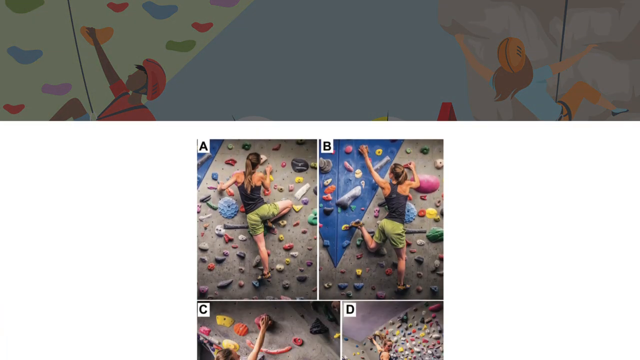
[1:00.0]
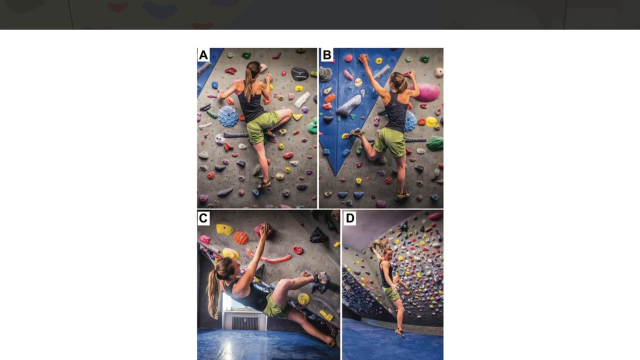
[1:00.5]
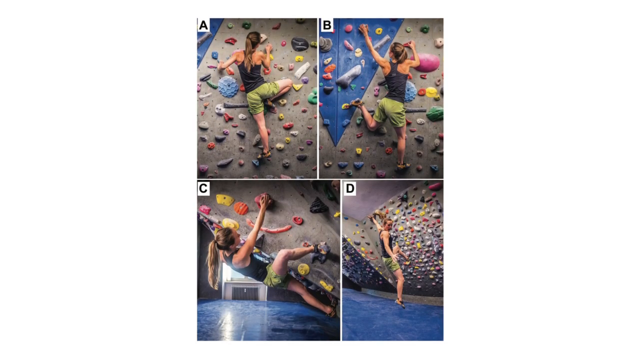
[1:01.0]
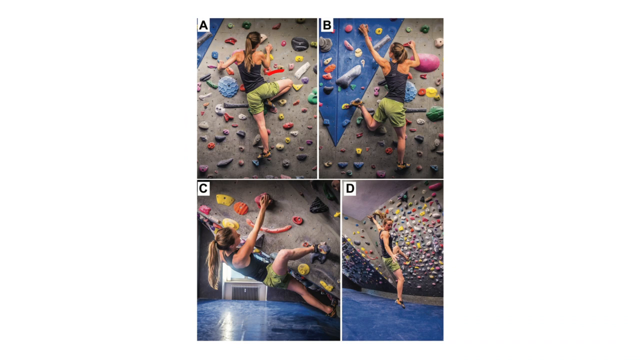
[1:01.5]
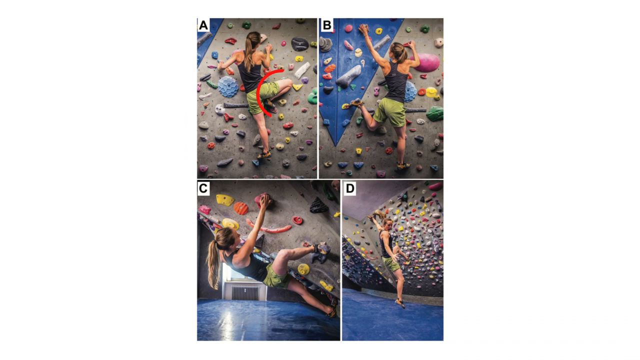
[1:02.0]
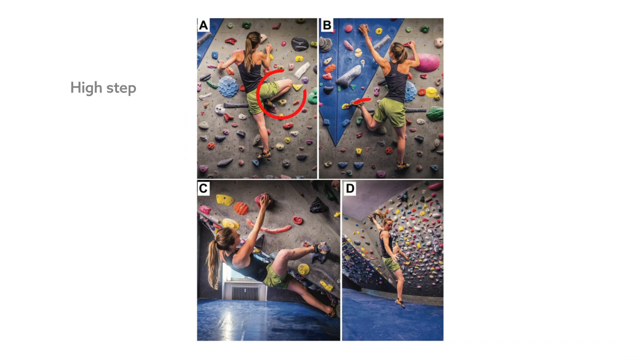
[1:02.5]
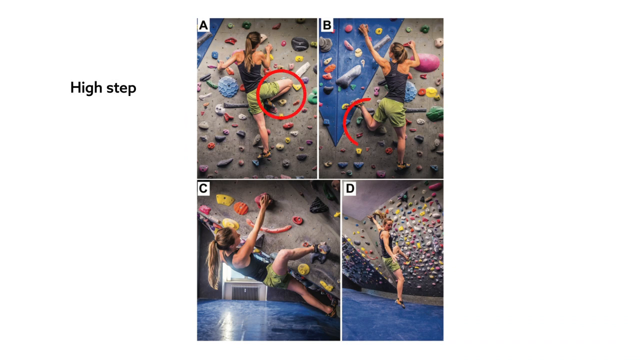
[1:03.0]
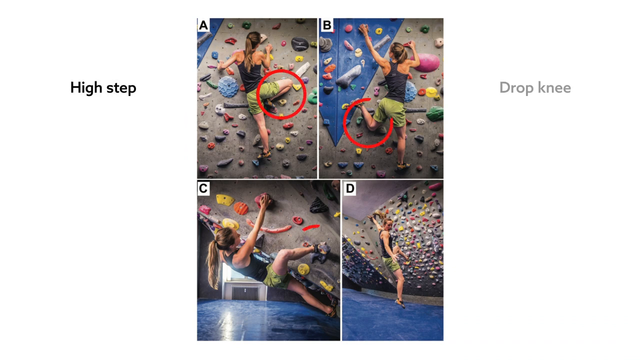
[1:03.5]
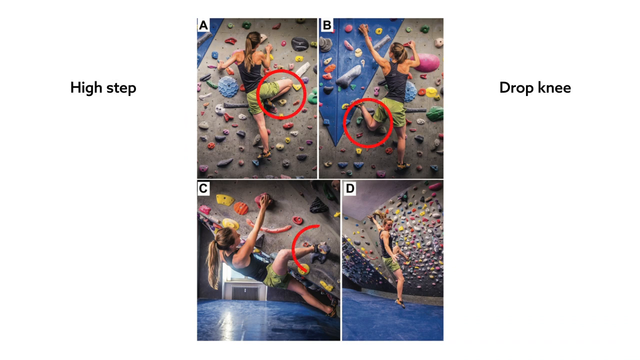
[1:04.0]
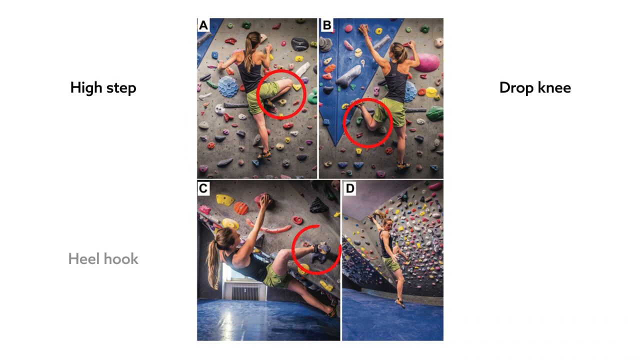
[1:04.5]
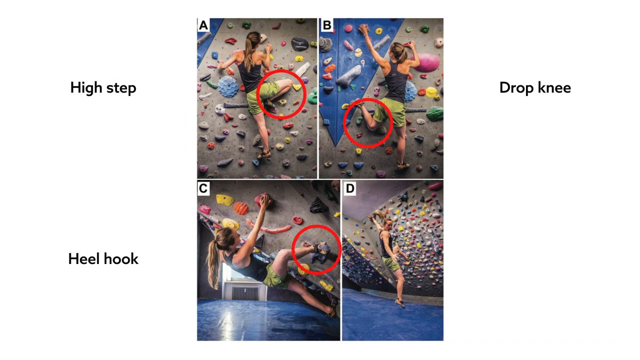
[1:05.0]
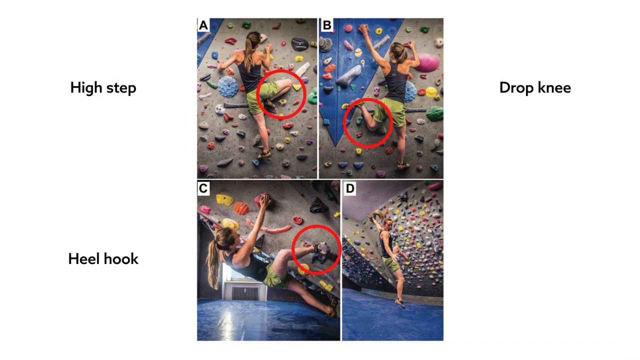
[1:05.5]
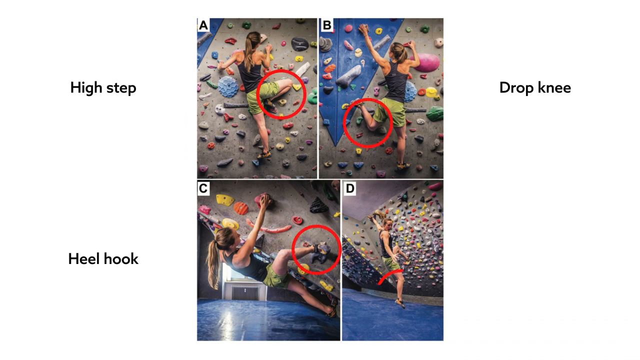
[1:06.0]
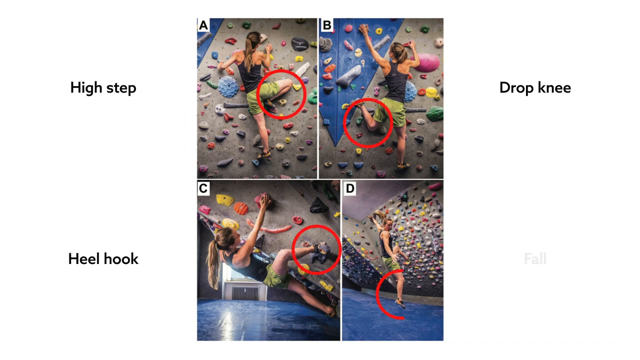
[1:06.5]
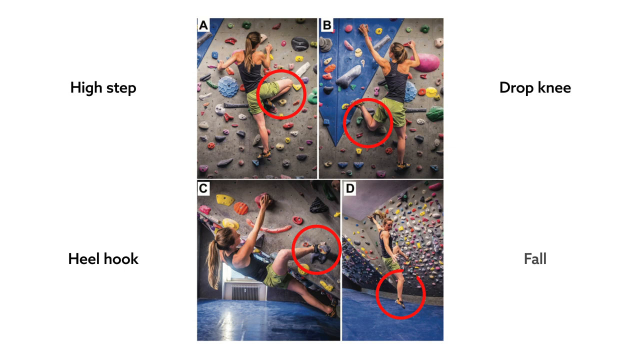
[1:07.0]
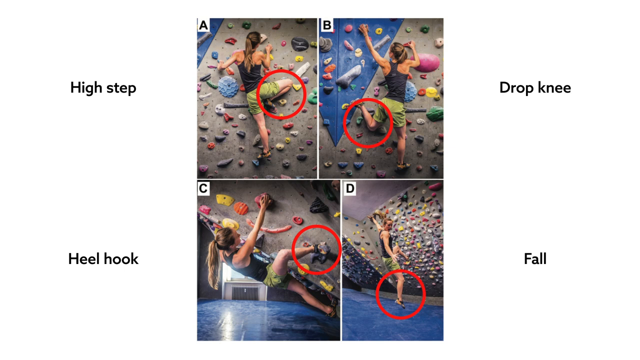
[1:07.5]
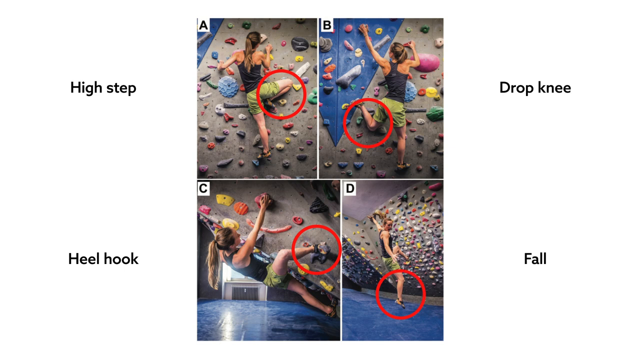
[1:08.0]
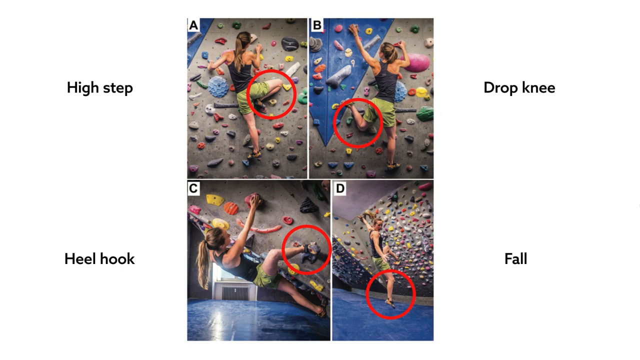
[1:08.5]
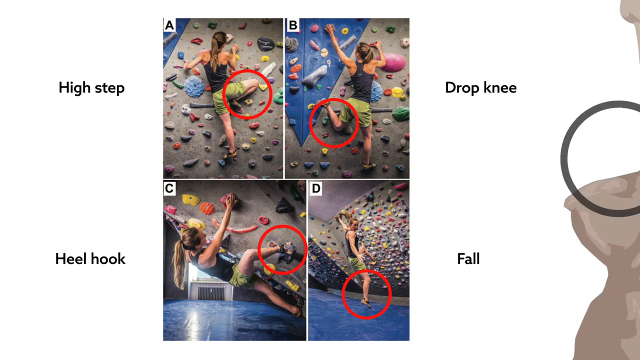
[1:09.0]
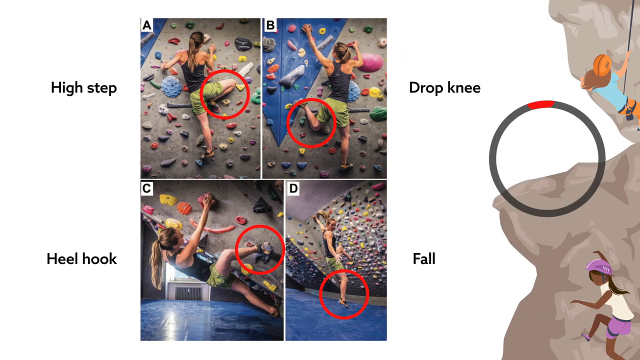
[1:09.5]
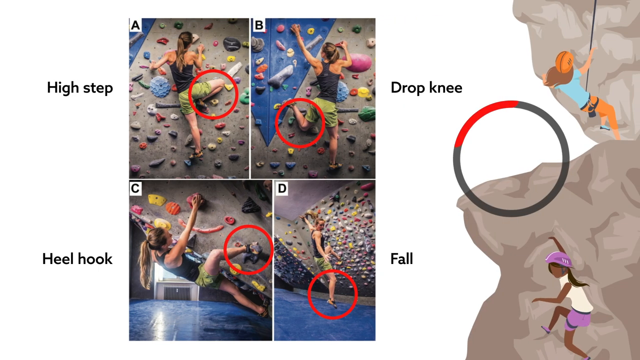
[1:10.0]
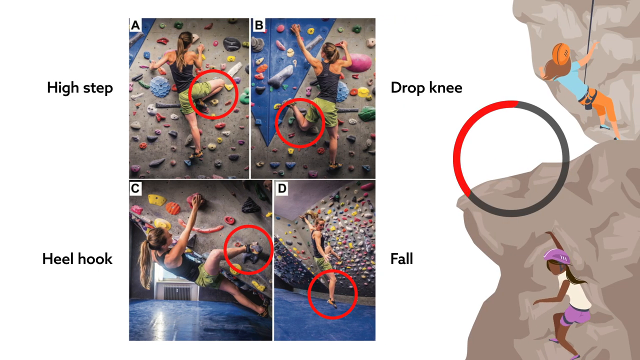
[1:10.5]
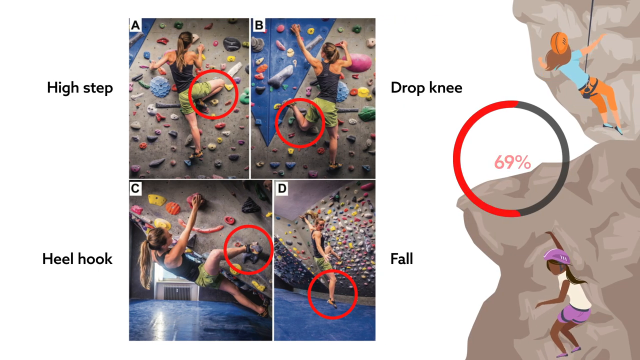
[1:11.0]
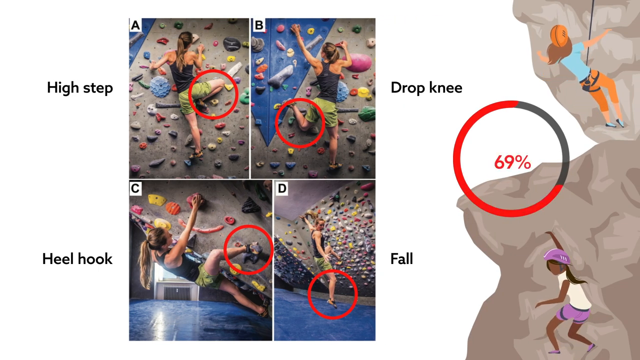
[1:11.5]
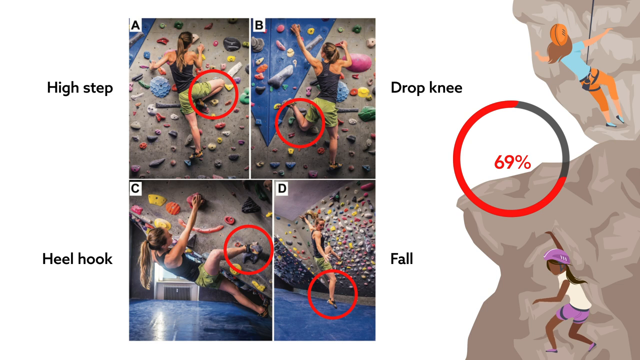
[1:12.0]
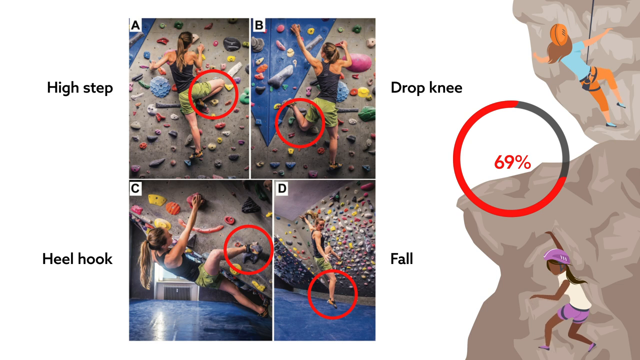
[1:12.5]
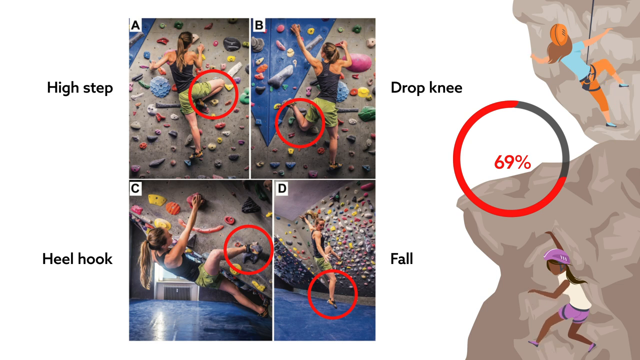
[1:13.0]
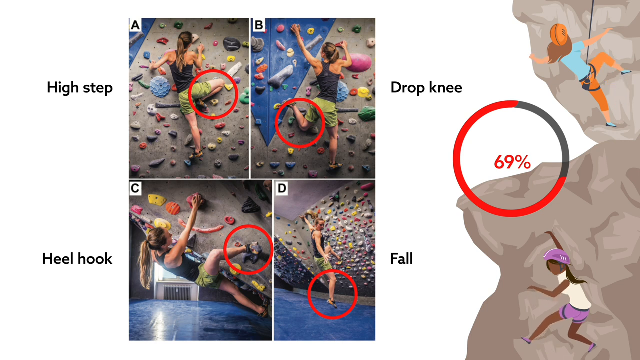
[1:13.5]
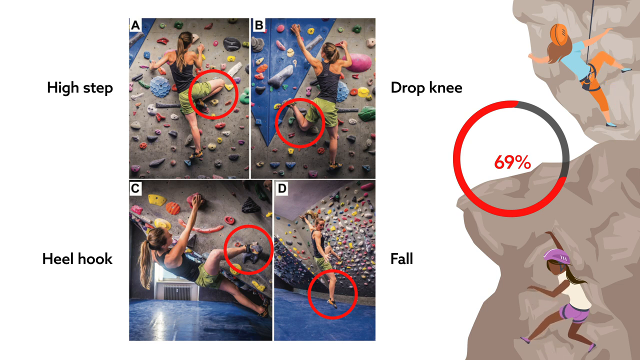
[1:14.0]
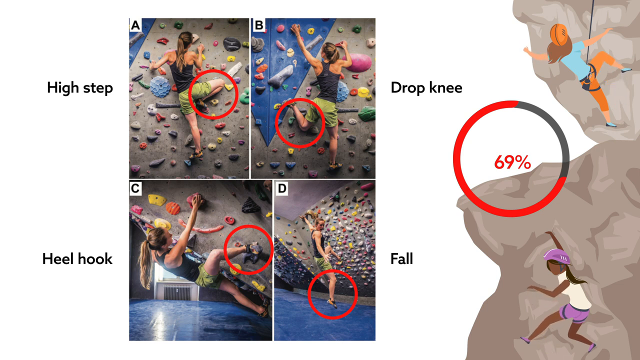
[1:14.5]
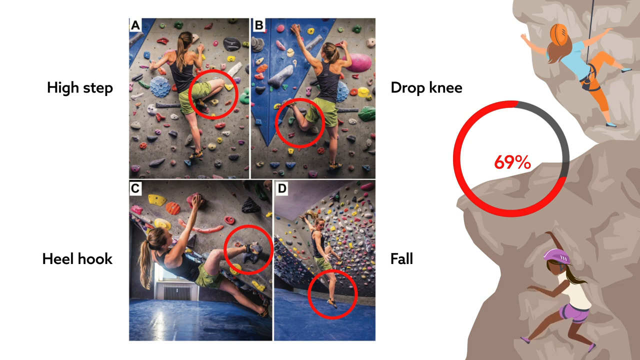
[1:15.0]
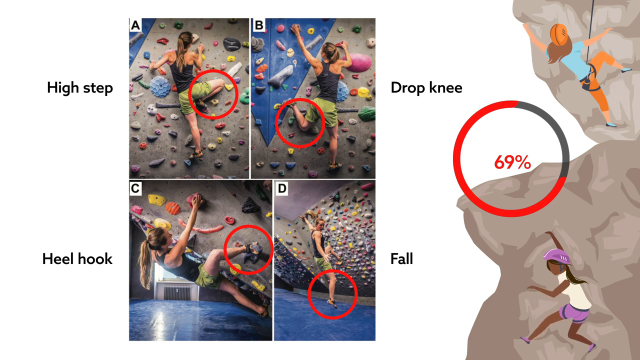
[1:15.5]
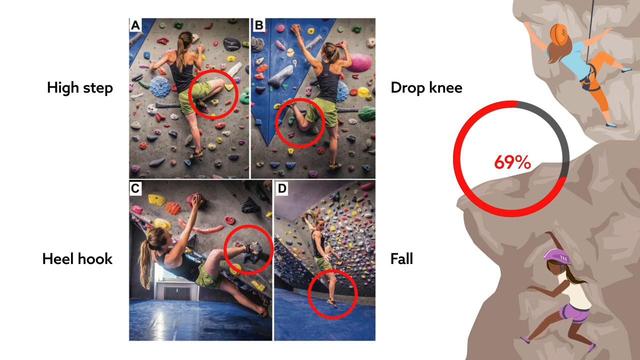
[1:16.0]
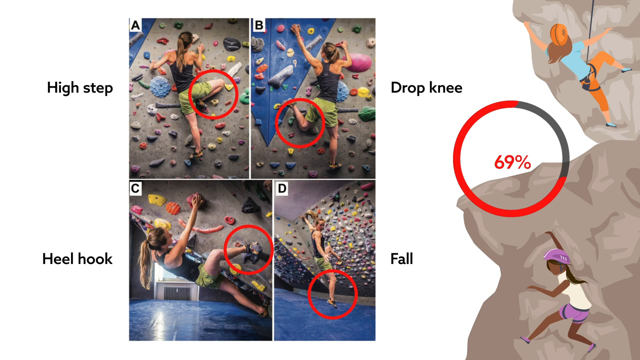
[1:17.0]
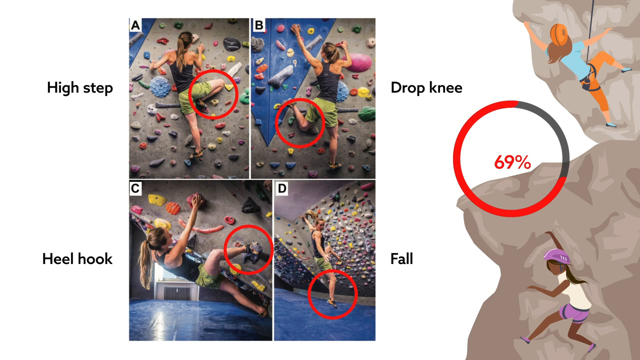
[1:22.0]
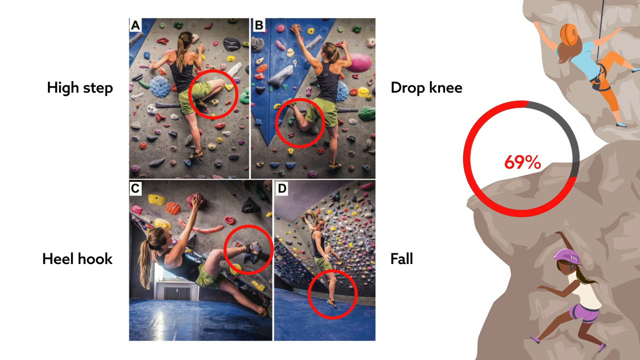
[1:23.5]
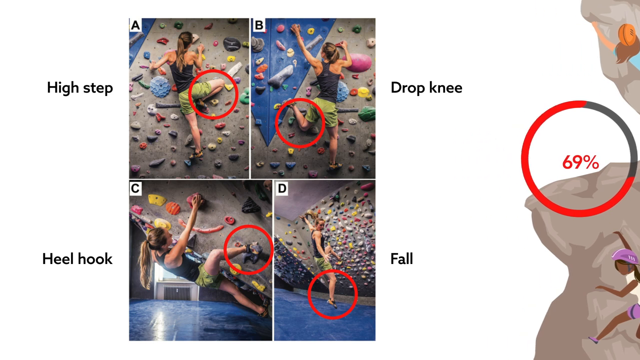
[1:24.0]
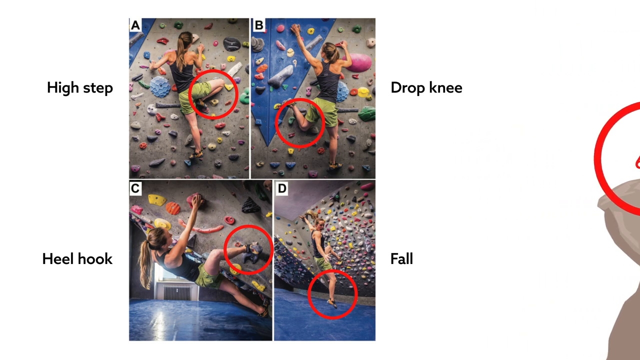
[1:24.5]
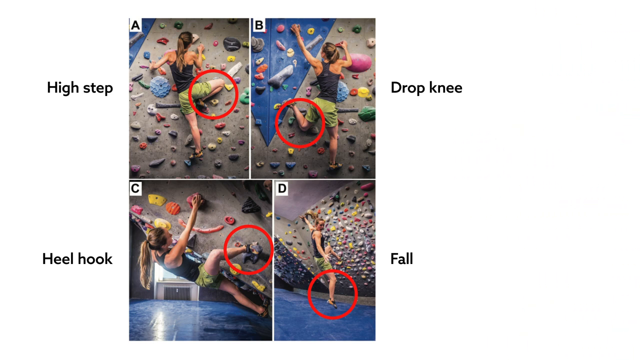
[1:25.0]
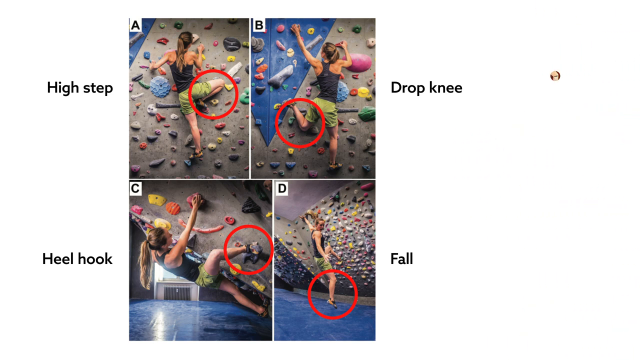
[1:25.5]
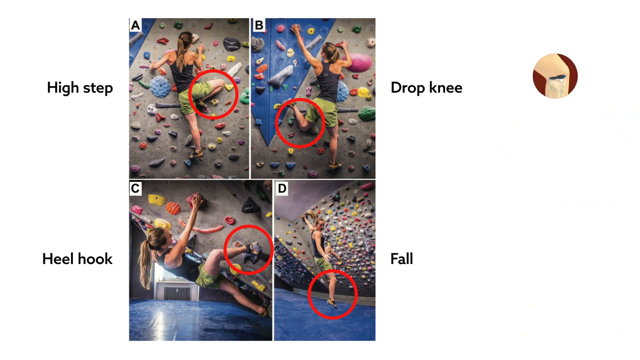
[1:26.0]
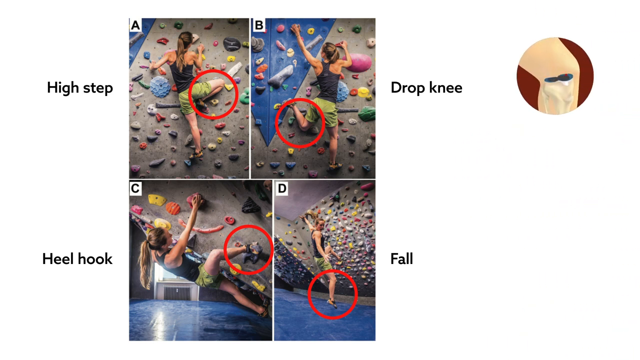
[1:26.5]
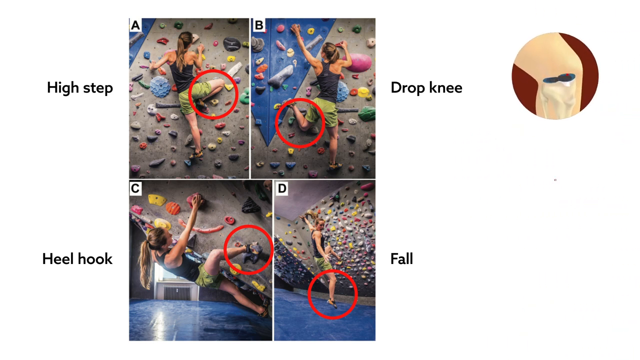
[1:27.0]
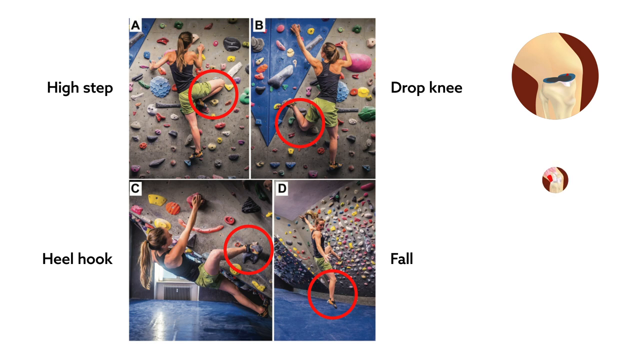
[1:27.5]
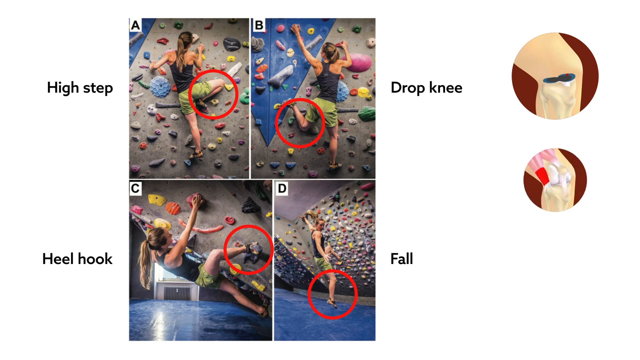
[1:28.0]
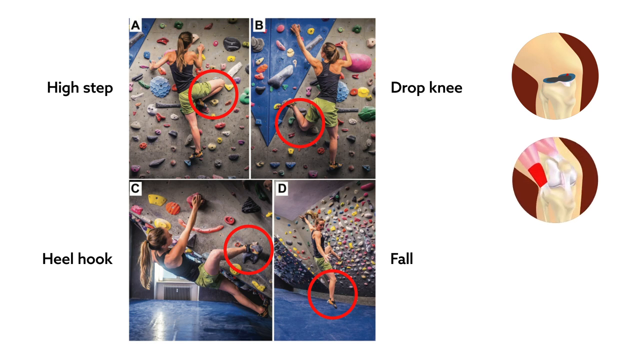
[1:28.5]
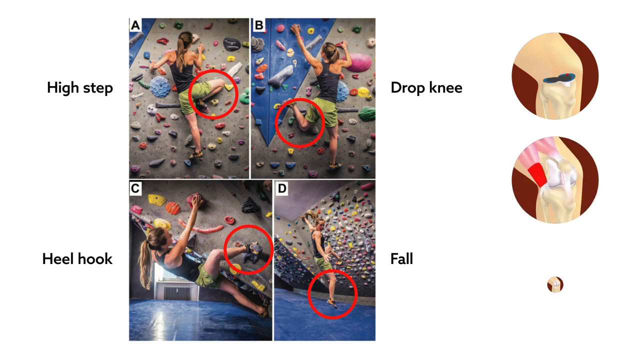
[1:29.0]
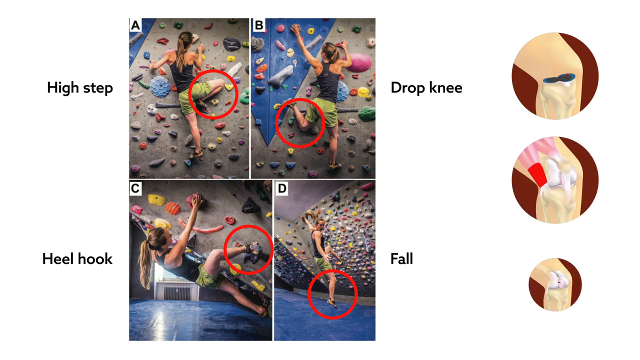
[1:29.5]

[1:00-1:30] A white screen comes up from the bottom and covers the entire screen. Four photos appear, two on the top and two on the bottom, labeled A, B, C and D at the top left of each. In photo A, a woman climbs a rock wall with red, white, yellow, black, green and pink rocks. She wears green shorts and a black top, and her shoulders are visible. Image B, to the right, shows the same woman. In image C, the same woman climbs the rock wall, this time kind of inclined with her back facing the ground. In image D, the woman looks like she has either jumped off the wall or is suspended in the air: her feet are not touching the ground, she is no longer on the wall, and she is in an upright position.